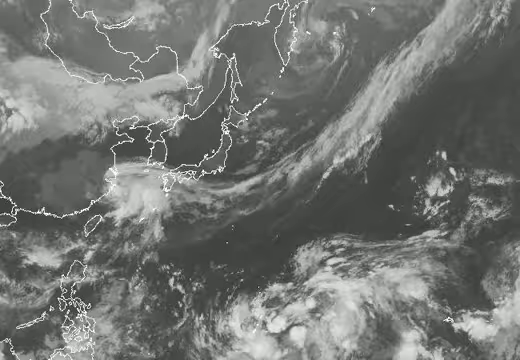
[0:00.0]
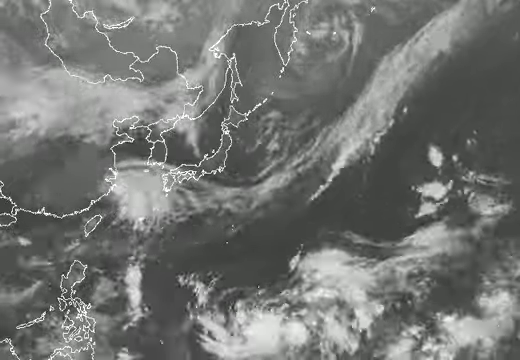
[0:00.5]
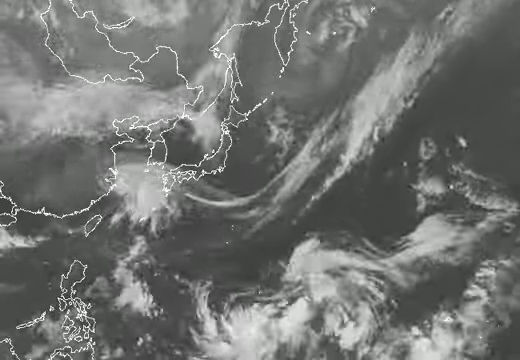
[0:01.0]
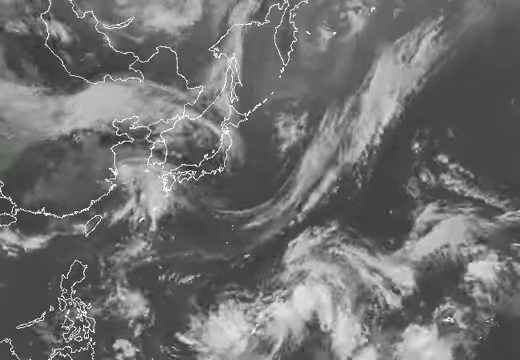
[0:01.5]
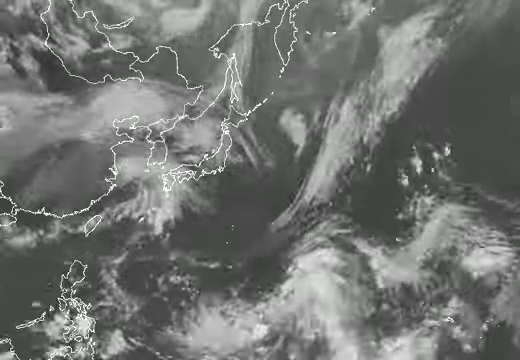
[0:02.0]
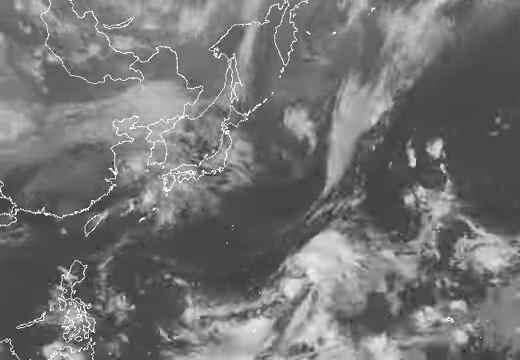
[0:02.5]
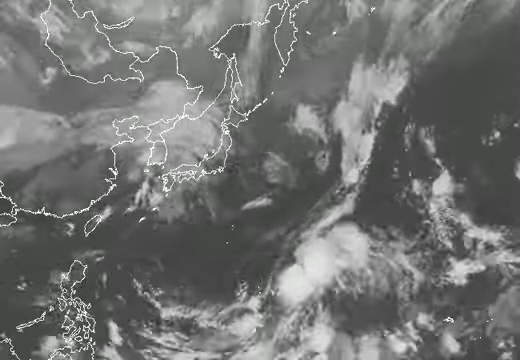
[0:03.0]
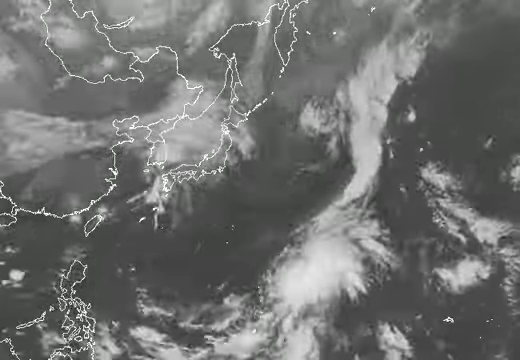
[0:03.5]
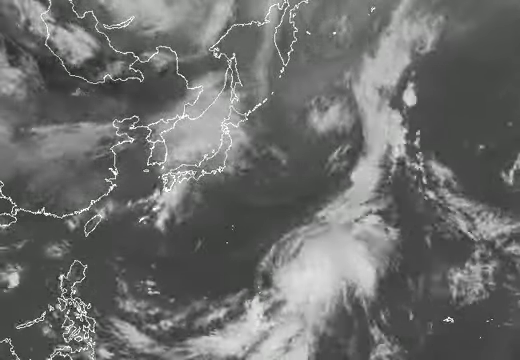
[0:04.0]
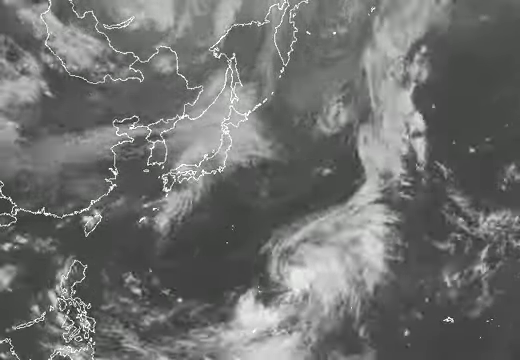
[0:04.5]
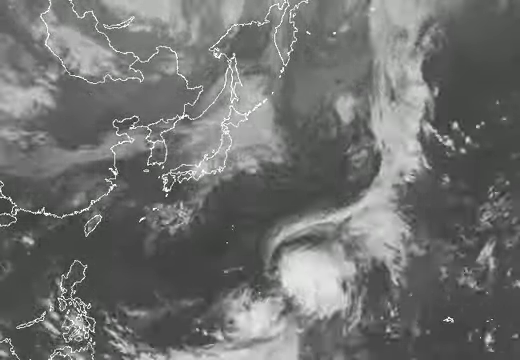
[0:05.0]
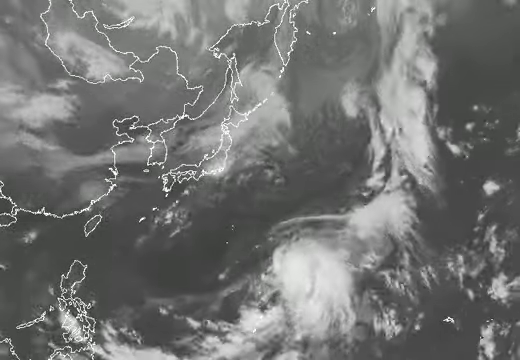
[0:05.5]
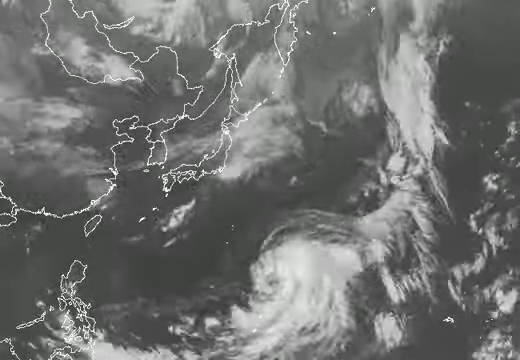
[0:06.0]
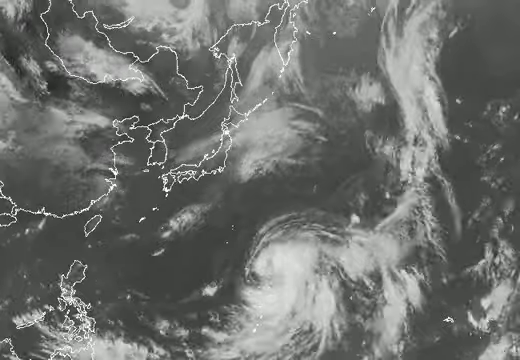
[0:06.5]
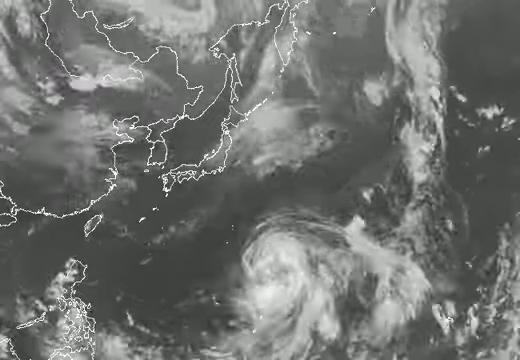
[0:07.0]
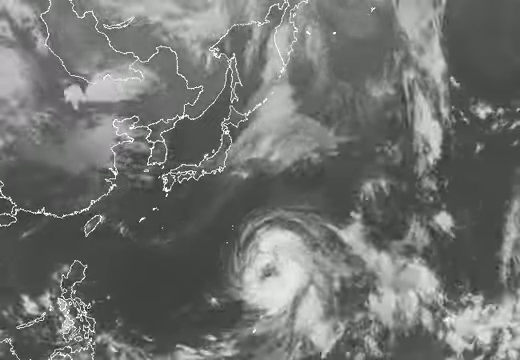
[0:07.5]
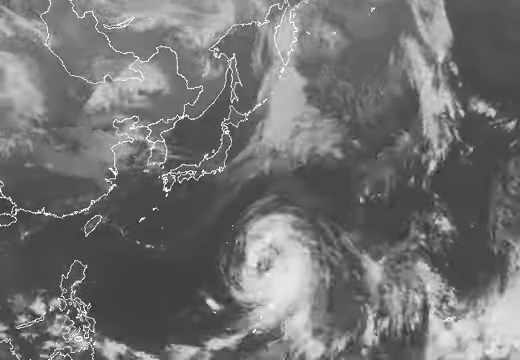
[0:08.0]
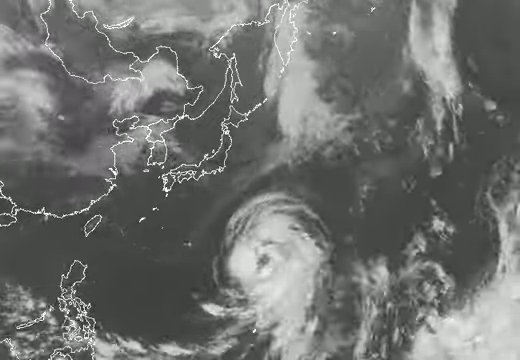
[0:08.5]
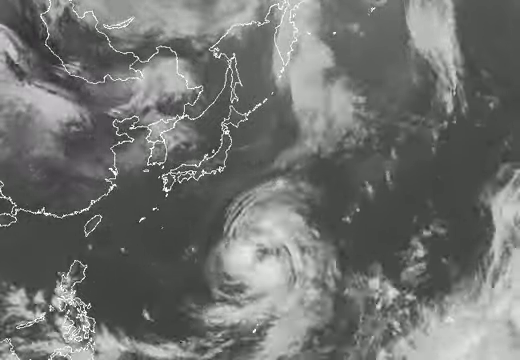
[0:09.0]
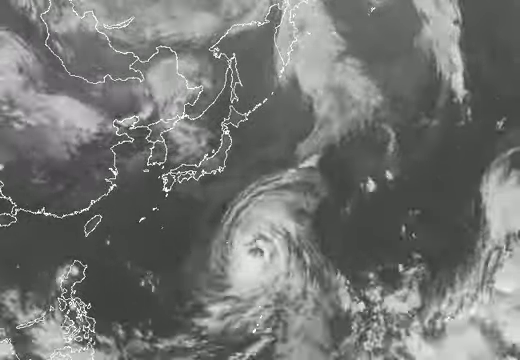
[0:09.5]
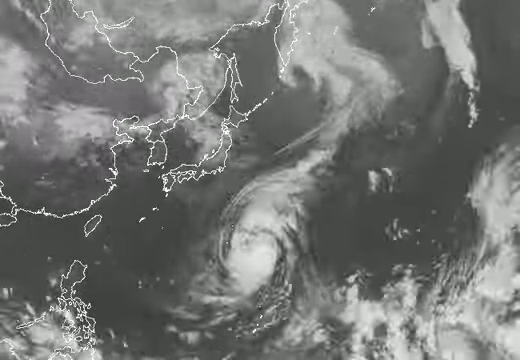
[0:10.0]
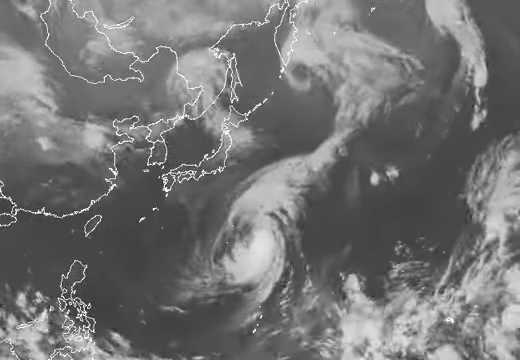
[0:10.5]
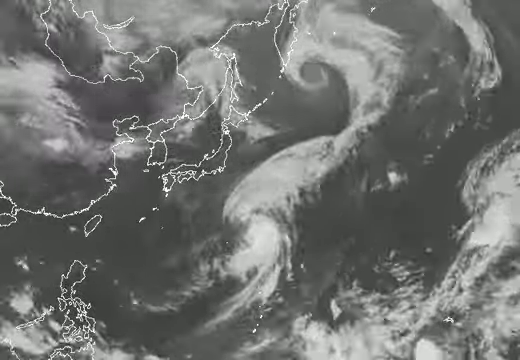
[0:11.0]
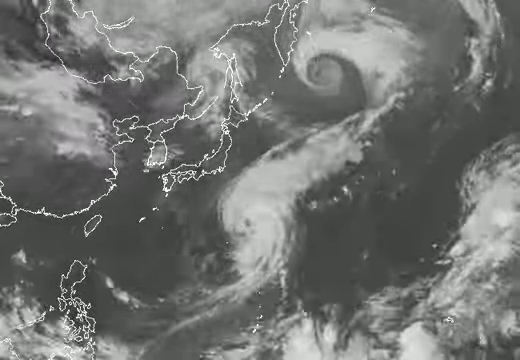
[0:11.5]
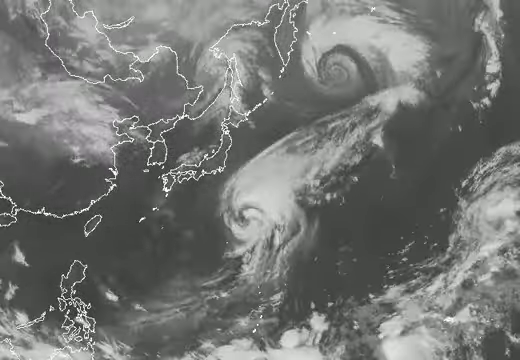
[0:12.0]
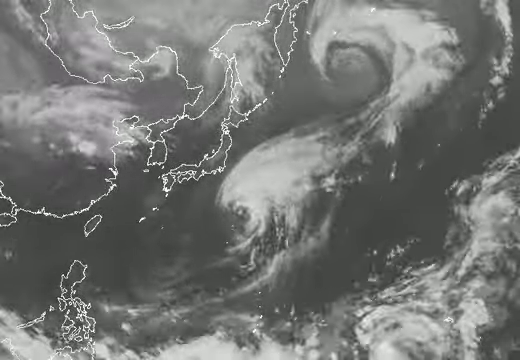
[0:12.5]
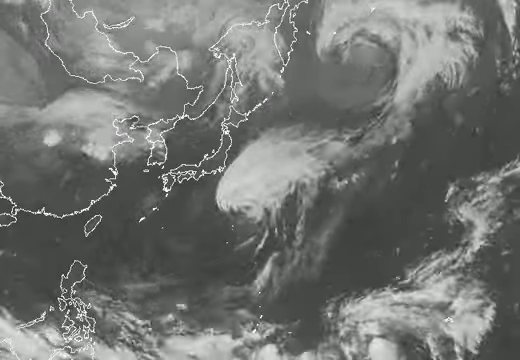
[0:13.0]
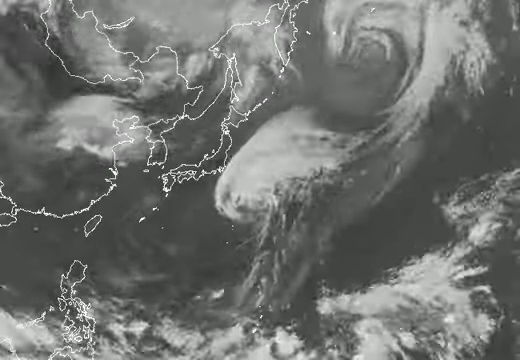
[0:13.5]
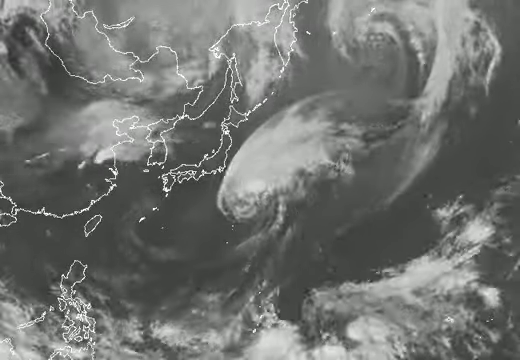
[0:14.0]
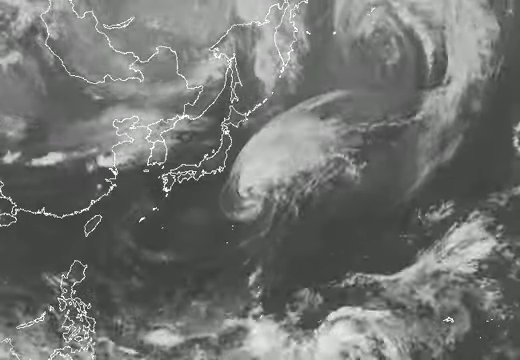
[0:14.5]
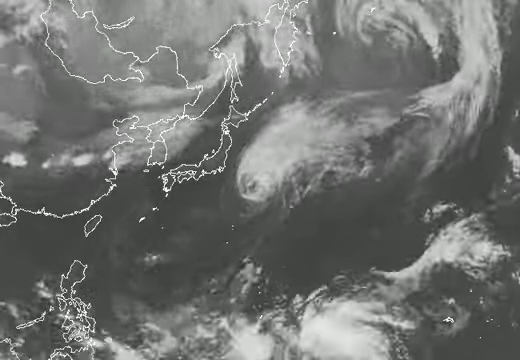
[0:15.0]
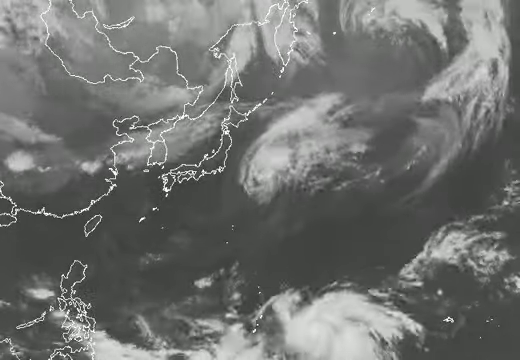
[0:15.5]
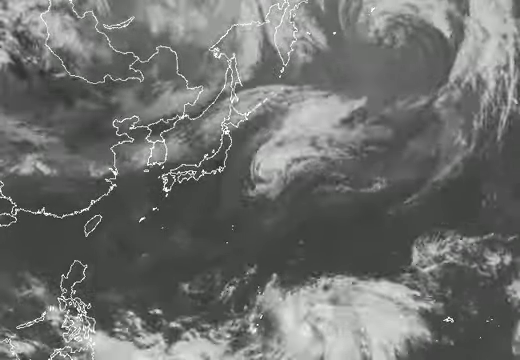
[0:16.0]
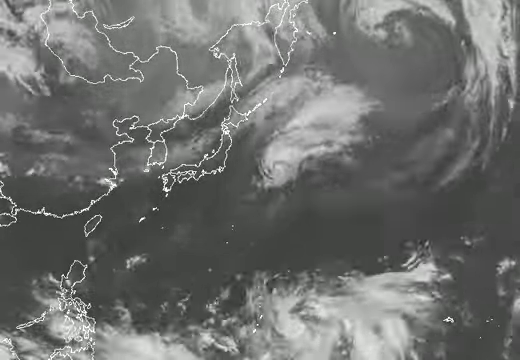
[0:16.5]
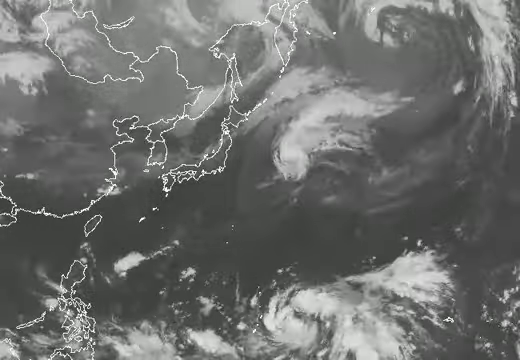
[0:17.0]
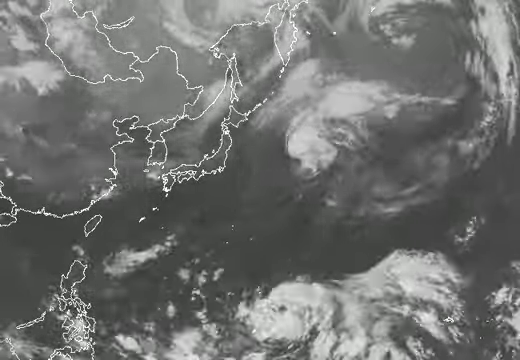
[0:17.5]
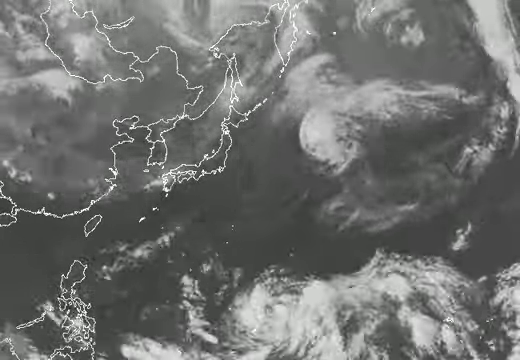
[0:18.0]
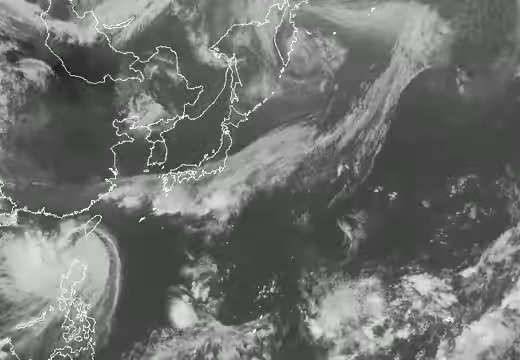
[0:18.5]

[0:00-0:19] A zoomed-in black-and-white video of a storm, resembling the kind shown during a weather report on the news. Everything is gray, with what looks like billowing white storm clouds; some of them seem circular, almost like a spiral, and those appear to be actual storms. In the upper left corner, kind of going across, there is a white outline of what looks like some land or a region of some kind, though it is unclear what section or region of the world it is. Everything is kind of swirling around, and because the footage is very zoomed in, it looks very grainy and the details are a little hard to make out.